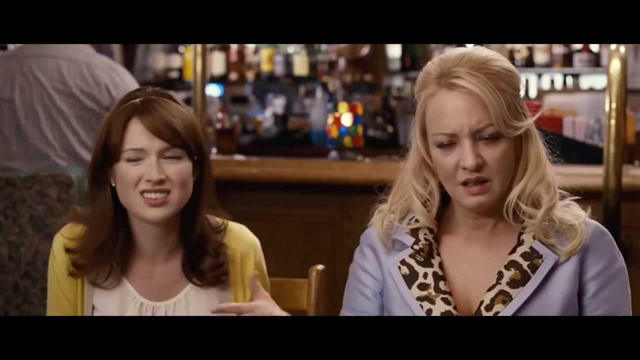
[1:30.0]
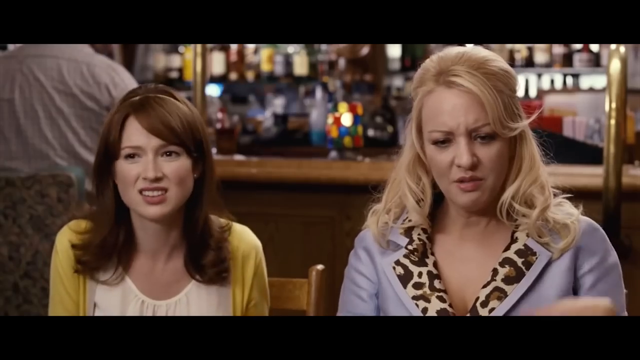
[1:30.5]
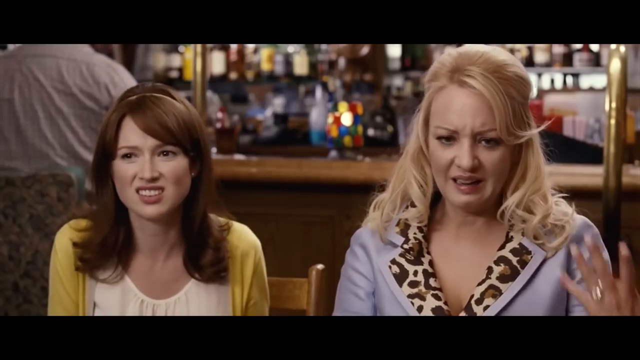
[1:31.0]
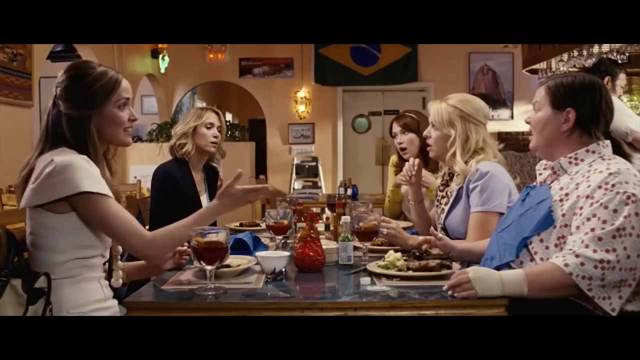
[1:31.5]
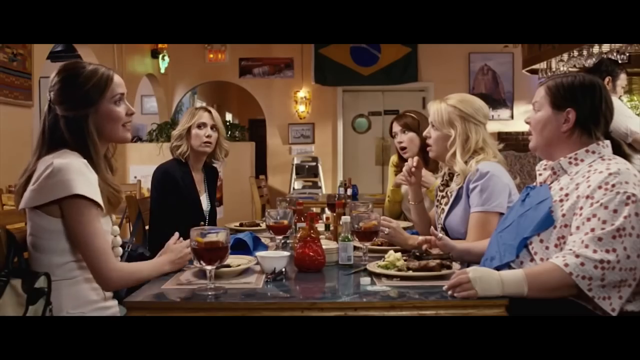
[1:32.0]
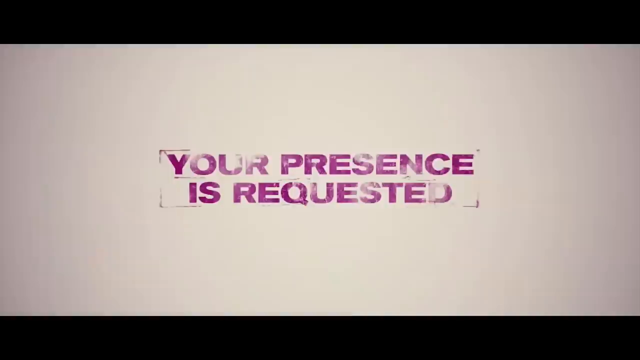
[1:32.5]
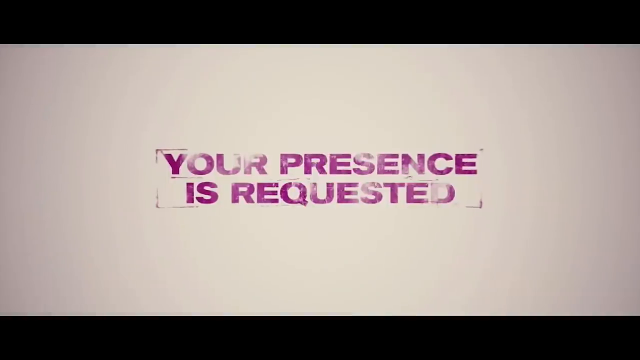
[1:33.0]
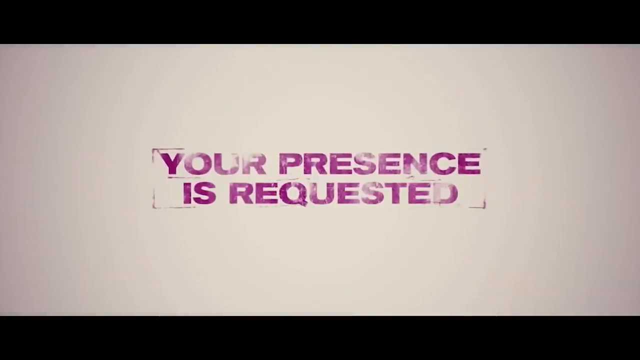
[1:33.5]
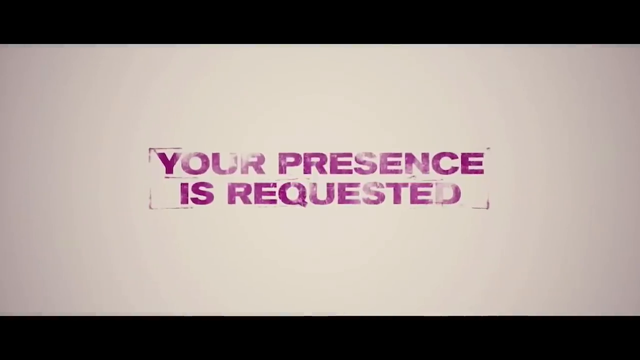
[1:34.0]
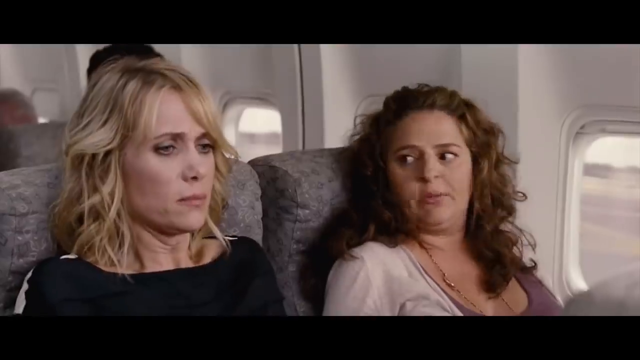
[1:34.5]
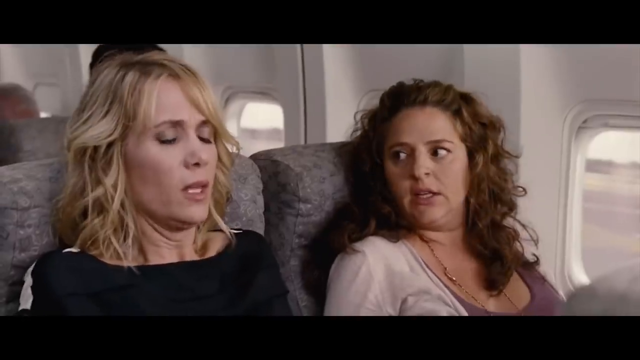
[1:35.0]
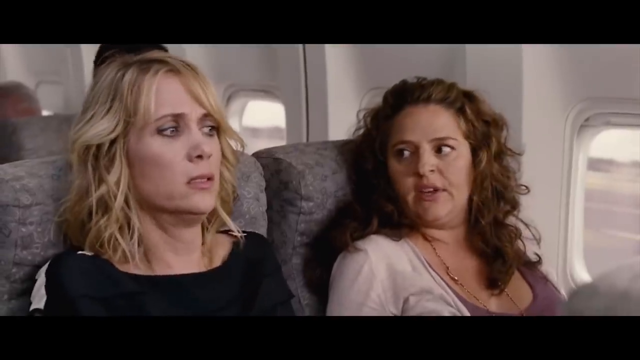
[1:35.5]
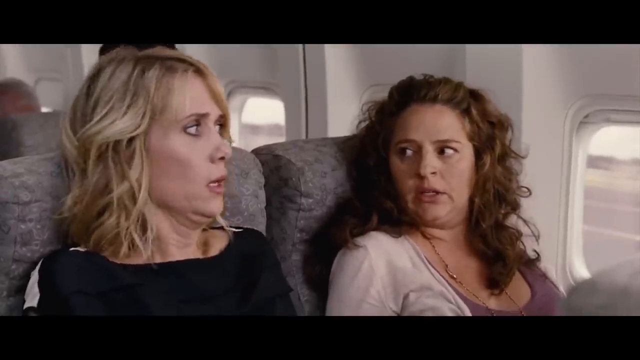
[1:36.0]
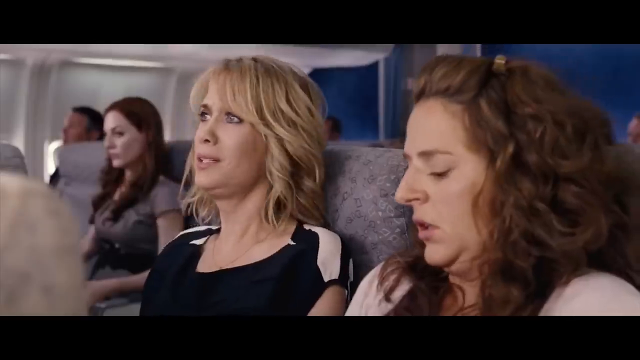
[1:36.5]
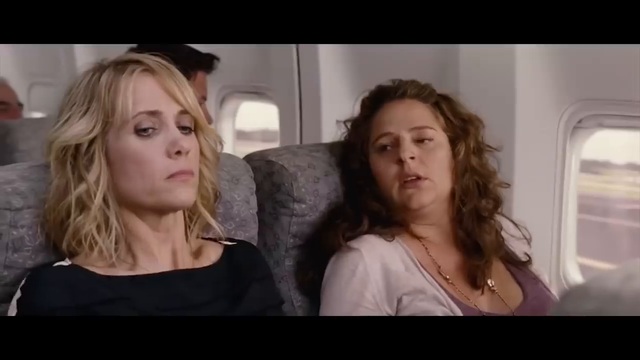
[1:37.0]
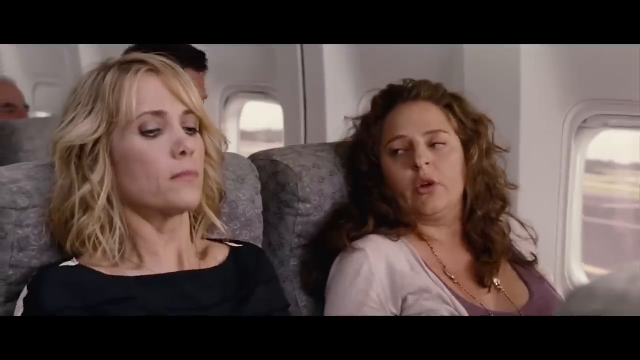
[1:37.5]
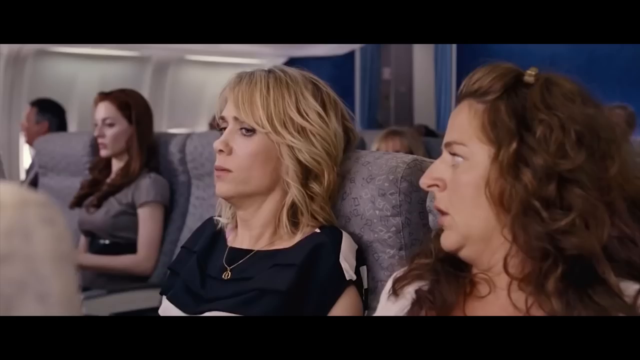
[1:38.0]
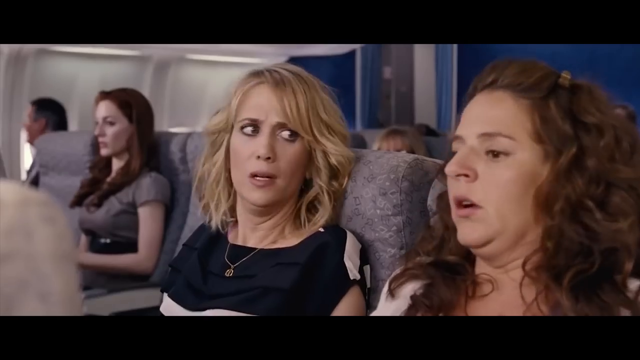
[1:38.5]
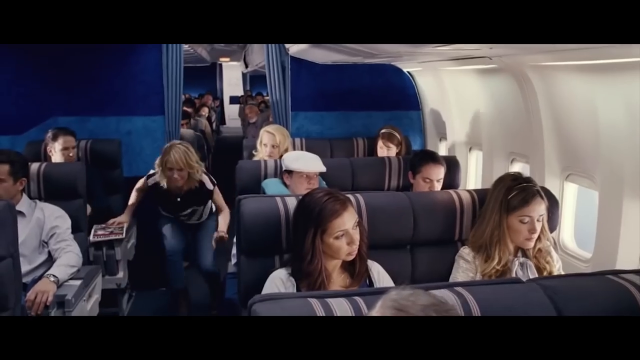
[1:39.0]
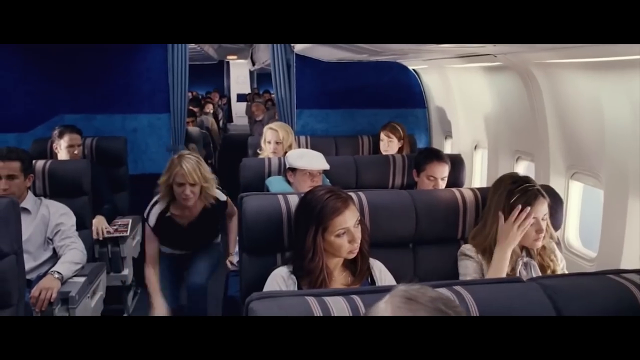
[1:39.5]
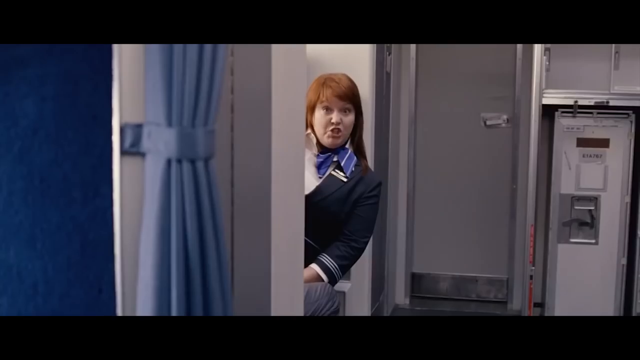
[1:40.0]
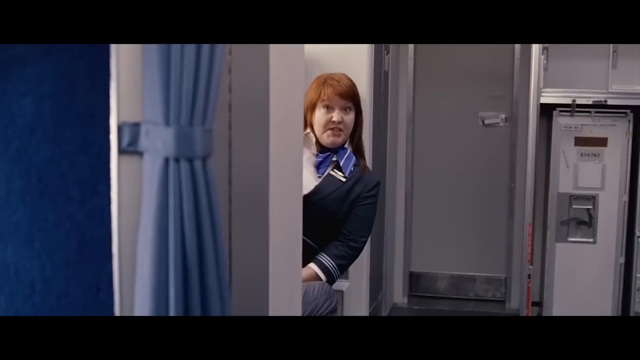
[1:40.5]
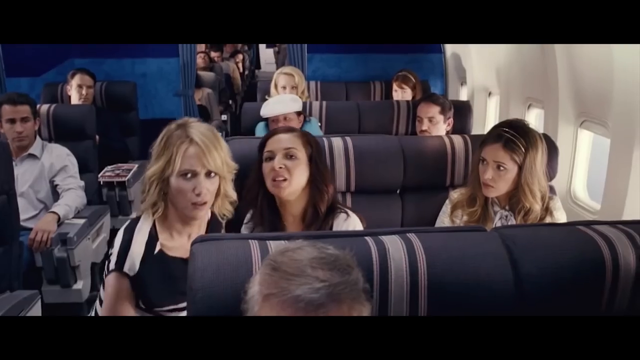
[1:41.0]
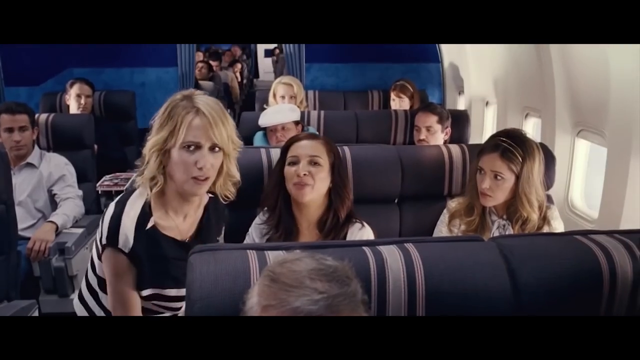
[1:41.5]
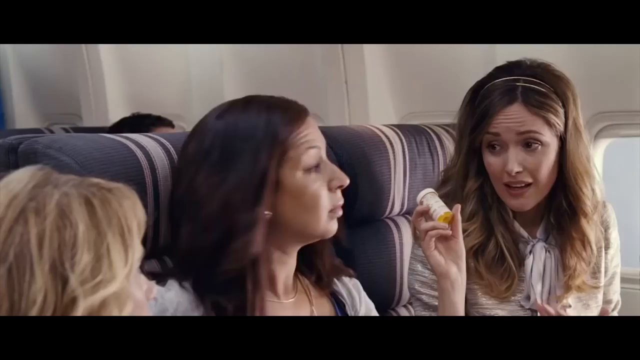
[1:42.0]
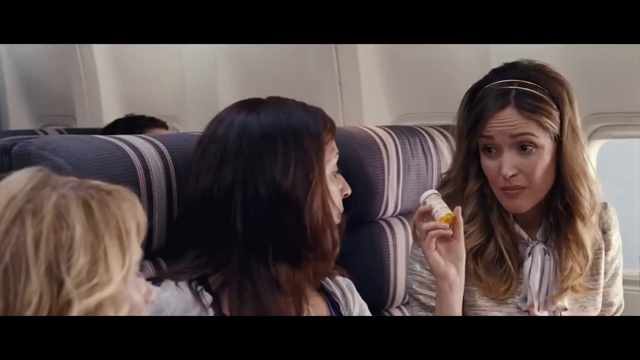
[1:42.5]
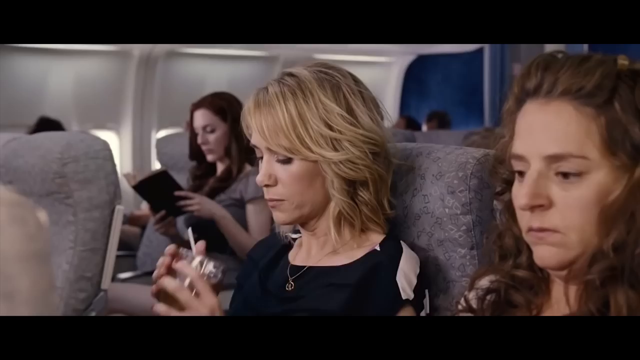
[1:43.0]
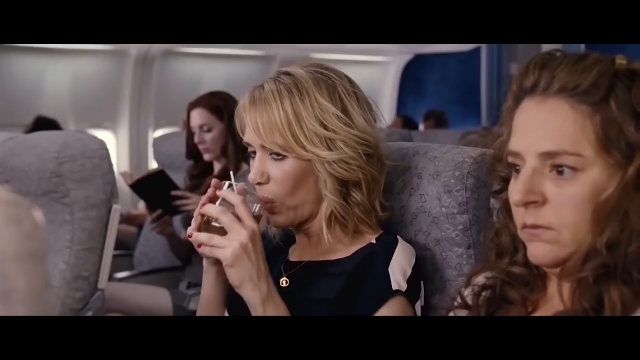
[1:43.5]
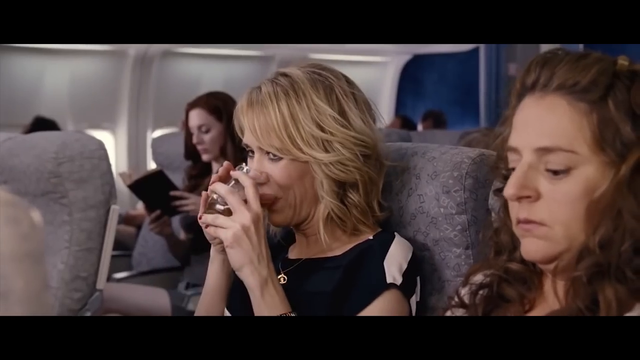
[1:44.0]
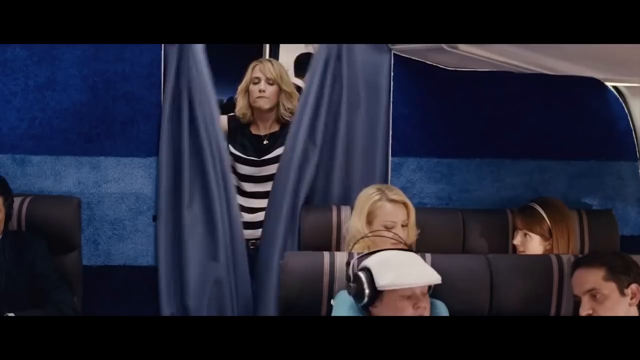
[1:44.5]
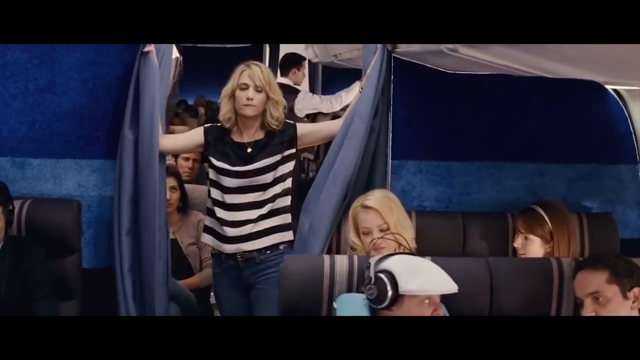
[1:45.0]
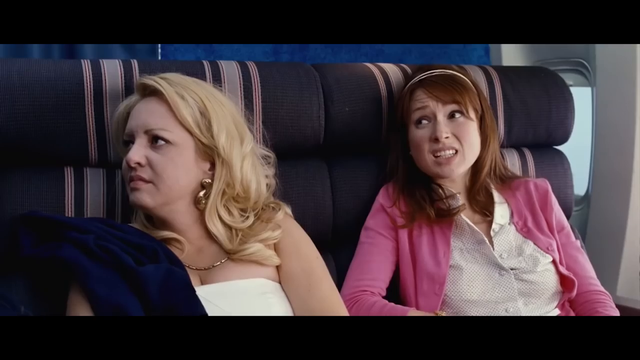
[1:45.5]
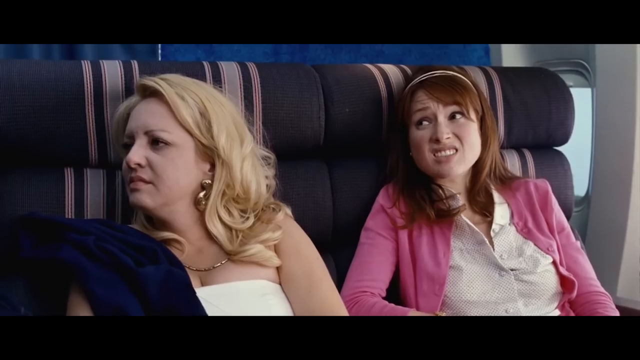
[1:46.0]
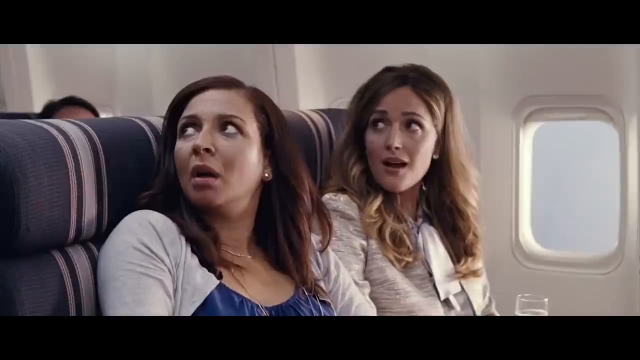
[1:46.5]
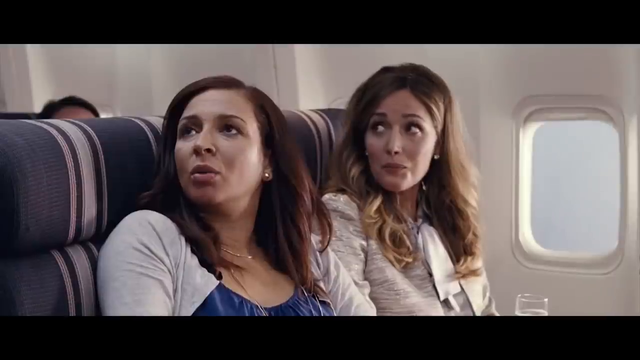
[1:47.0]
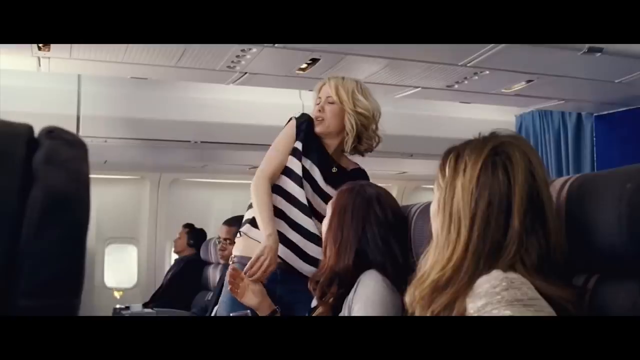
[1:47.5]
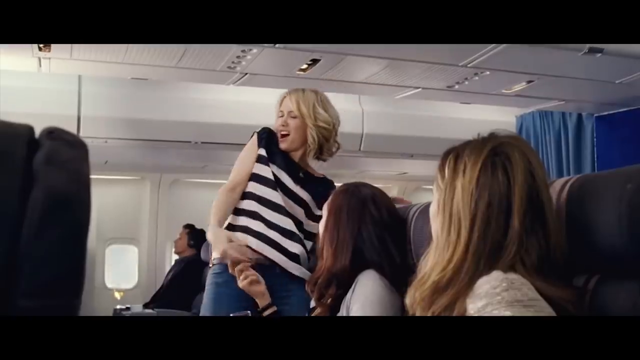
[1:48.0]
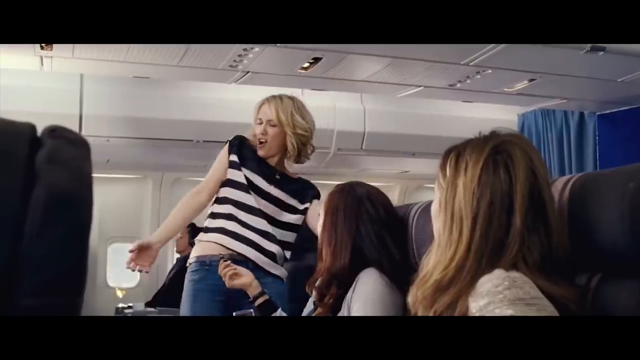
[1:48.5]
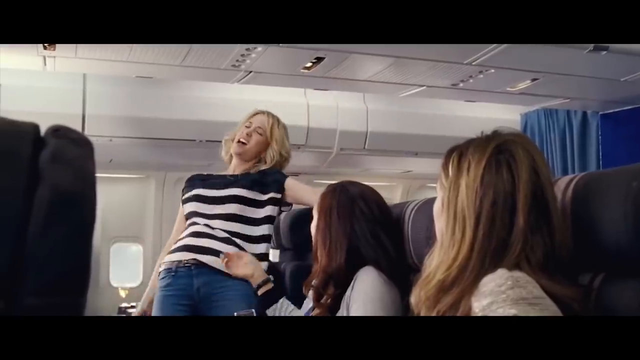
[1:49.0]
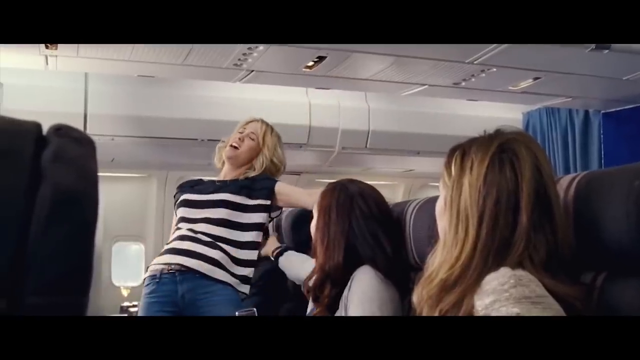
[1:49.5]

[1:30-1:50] The women sit at their table in the restaurant having a conversation, three on one side and three on the other. The woman sitting in the middle on the left appears to have gotten up, maybe to go to the restroom. Text on the screen reads "your presence is requested." The women are then on an airplane on the runway; out the window, it is visible that they have not taken off yet. The woman on the left wears a black shirt and looks very uncomfortable with the conversation; the woman on the right wears a light-colored blouse. The airplane gets ready to take off. One of the women offers another a pill, and the other woman drinks some wine, apparently trying to calm themselves before the flight. Next, one of the women goes into the first class section, opens the curtain and looks in to see two or four of the women there. She is apparently drunk, seemingly having been stuck back in the regular section instead of first class, and she causes a scene in first class by dancing and leaning backwards.